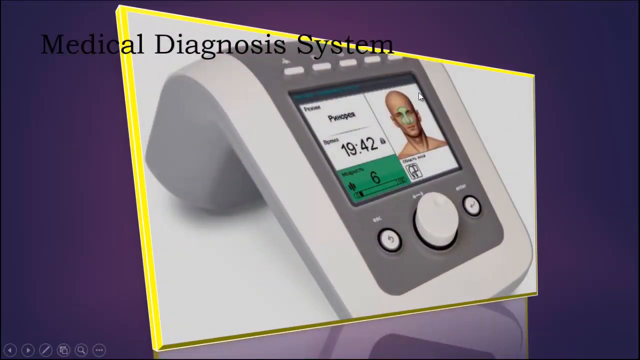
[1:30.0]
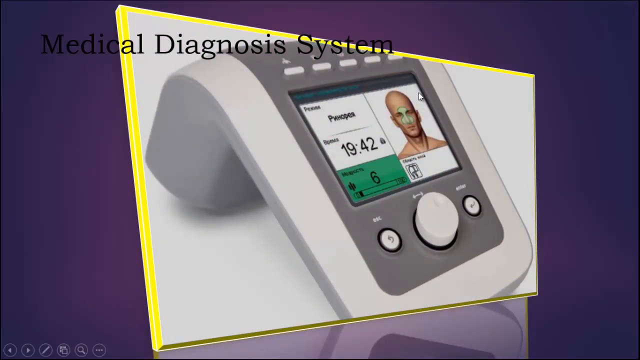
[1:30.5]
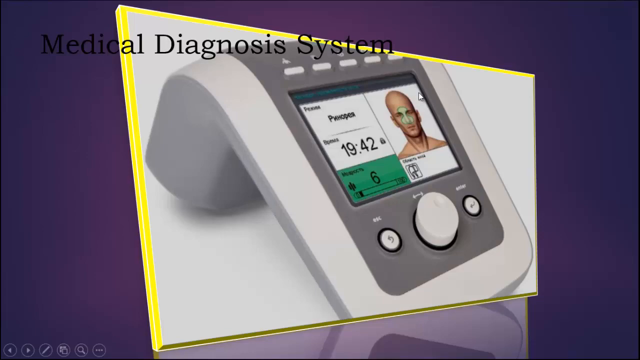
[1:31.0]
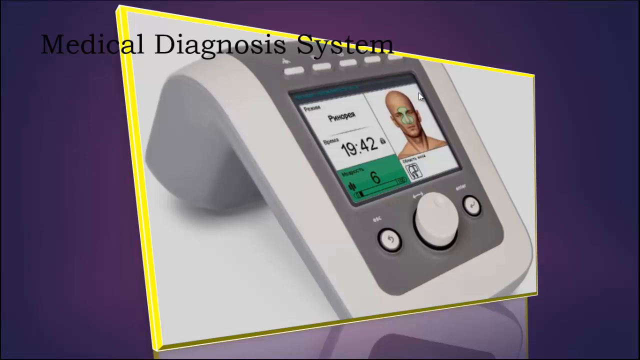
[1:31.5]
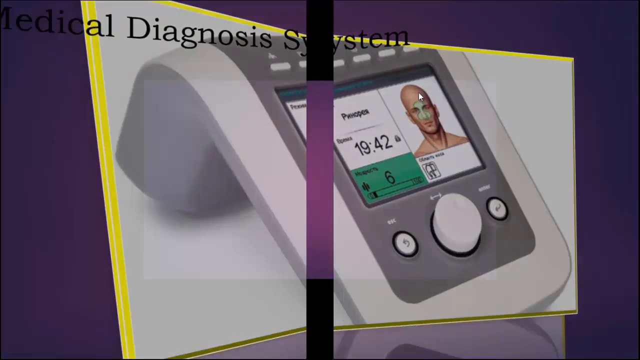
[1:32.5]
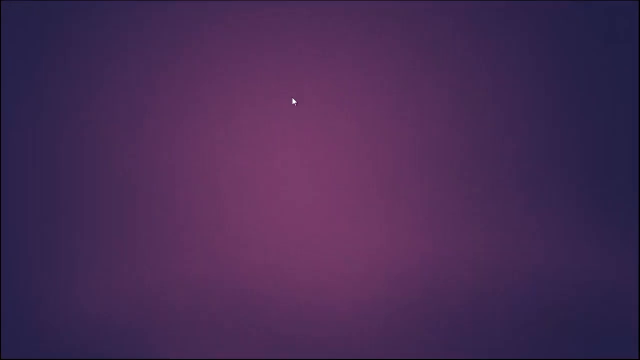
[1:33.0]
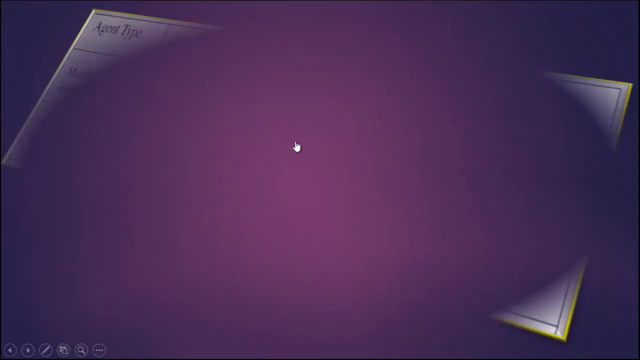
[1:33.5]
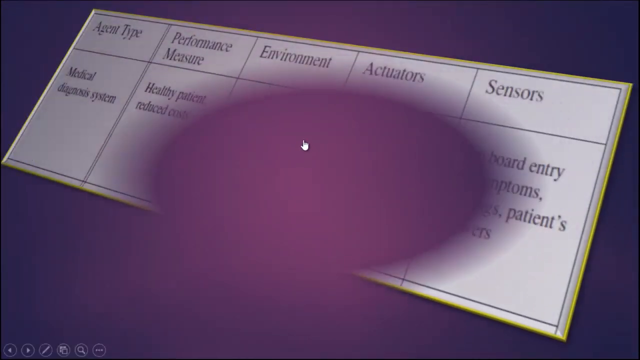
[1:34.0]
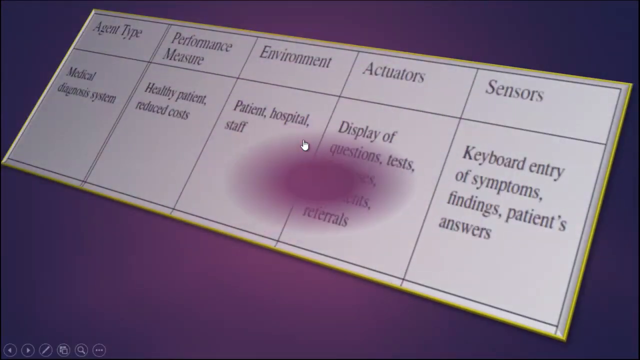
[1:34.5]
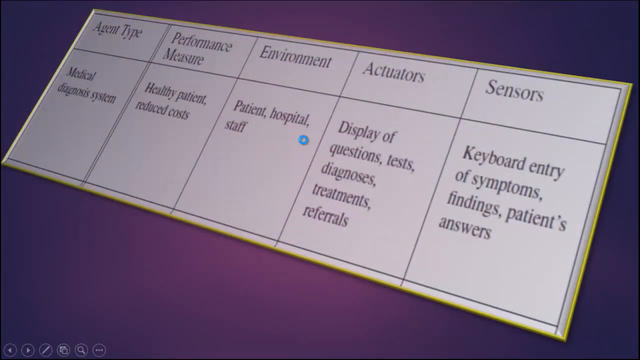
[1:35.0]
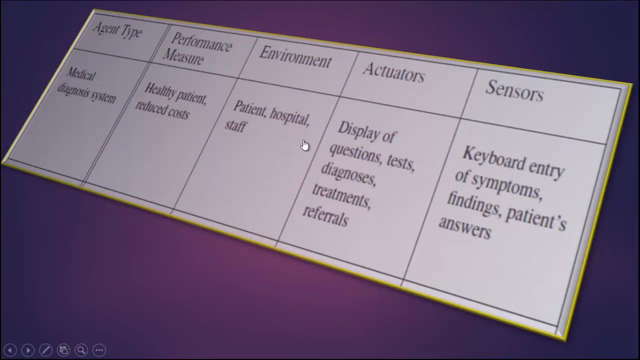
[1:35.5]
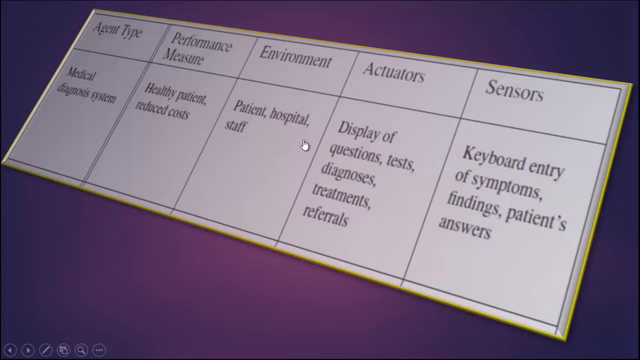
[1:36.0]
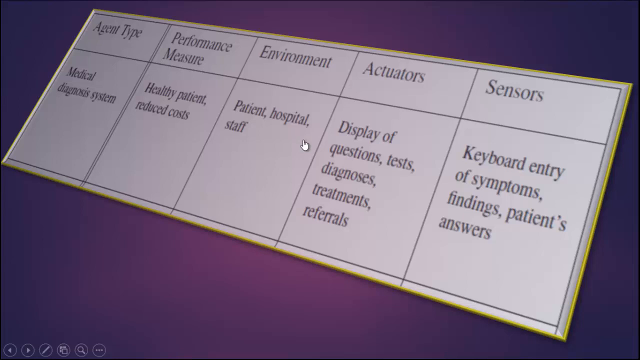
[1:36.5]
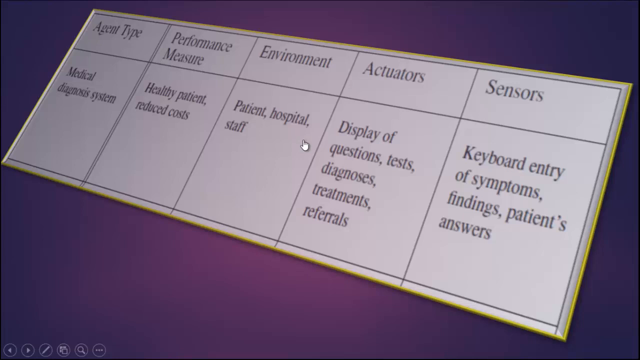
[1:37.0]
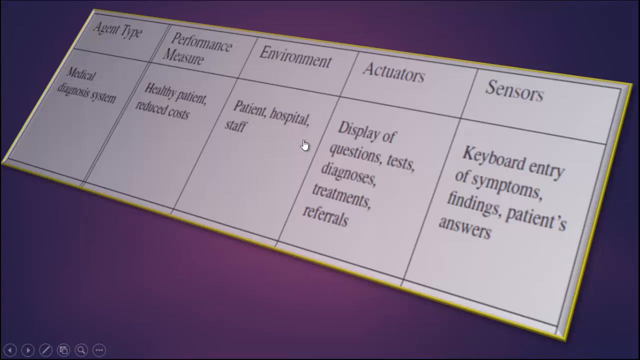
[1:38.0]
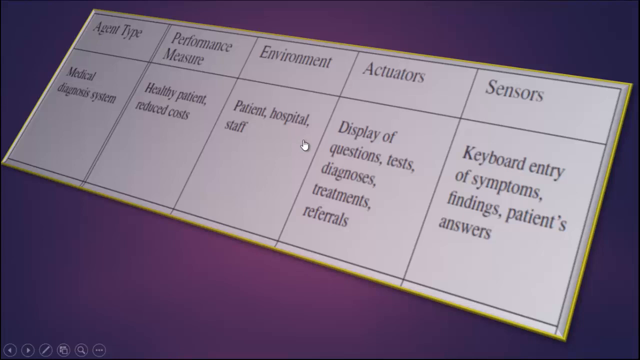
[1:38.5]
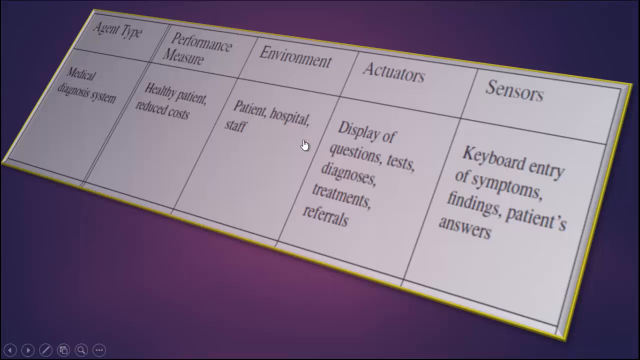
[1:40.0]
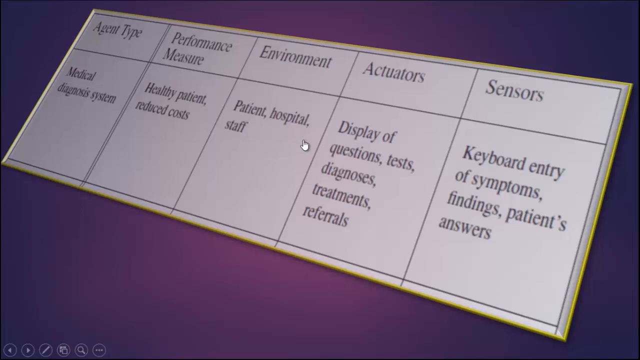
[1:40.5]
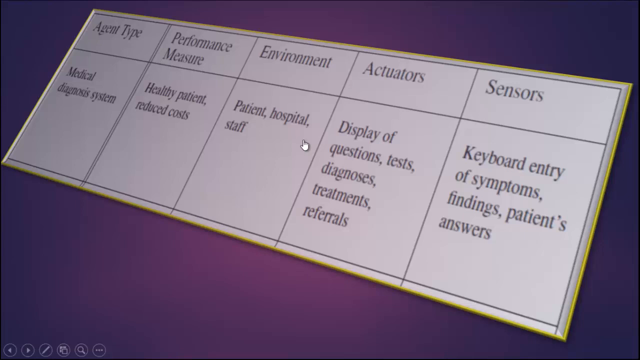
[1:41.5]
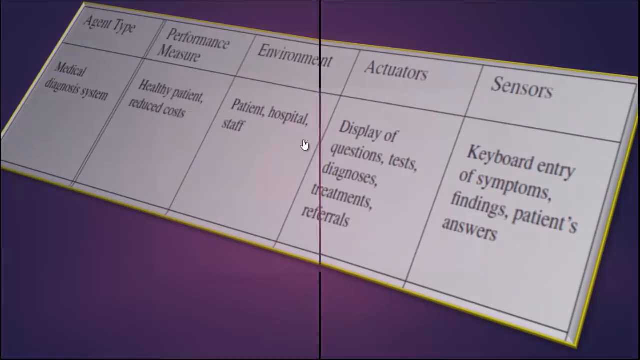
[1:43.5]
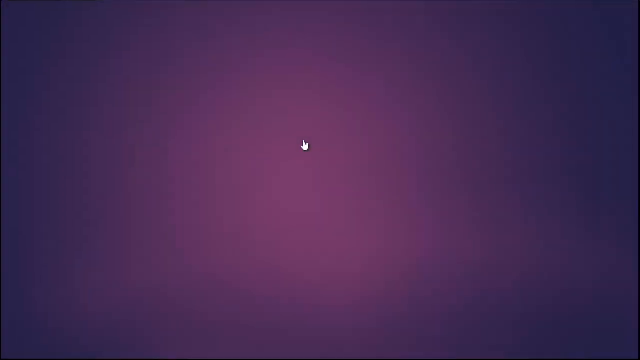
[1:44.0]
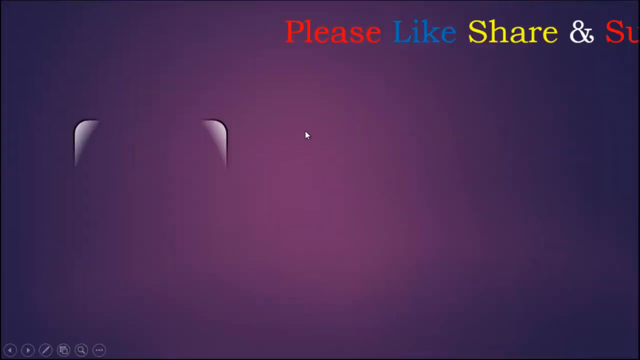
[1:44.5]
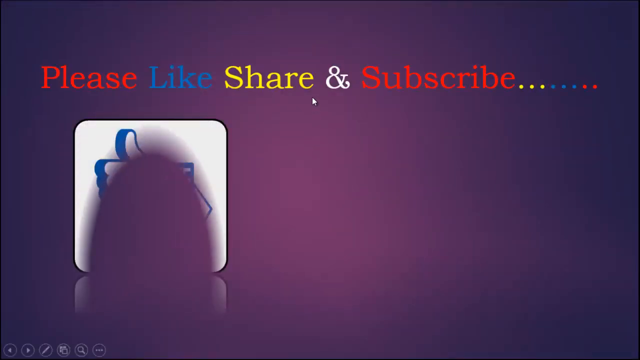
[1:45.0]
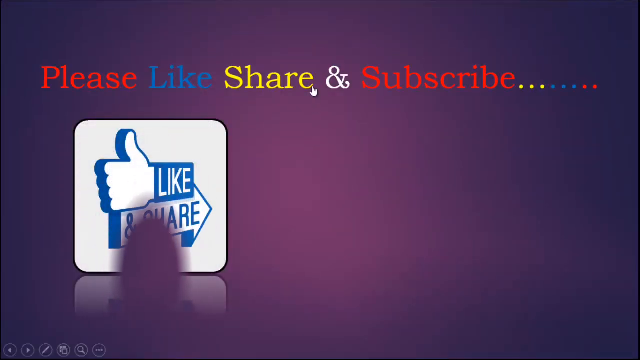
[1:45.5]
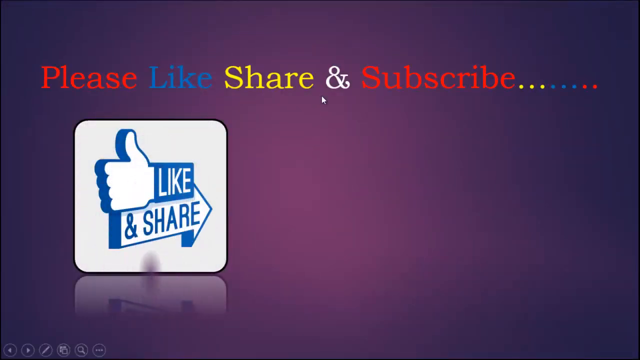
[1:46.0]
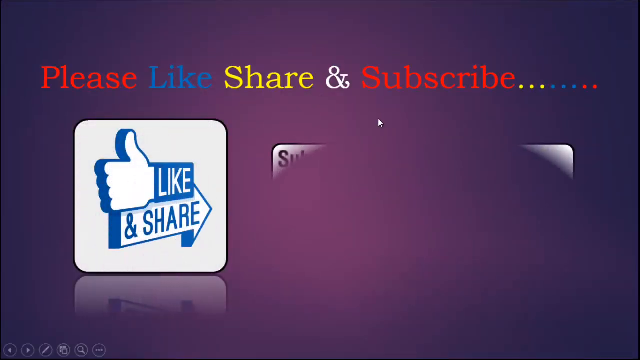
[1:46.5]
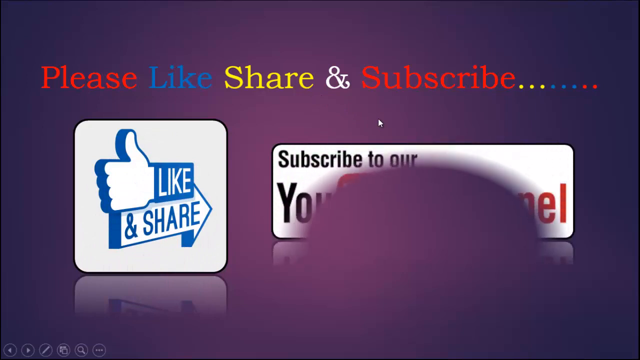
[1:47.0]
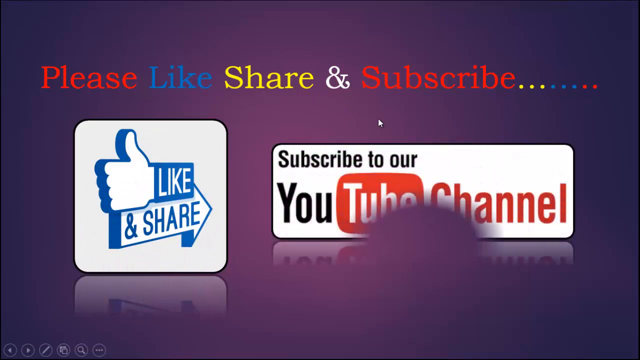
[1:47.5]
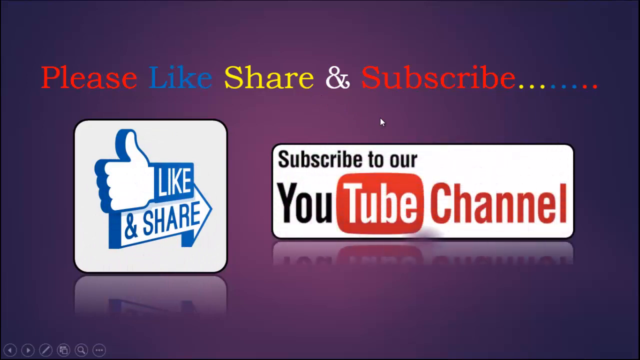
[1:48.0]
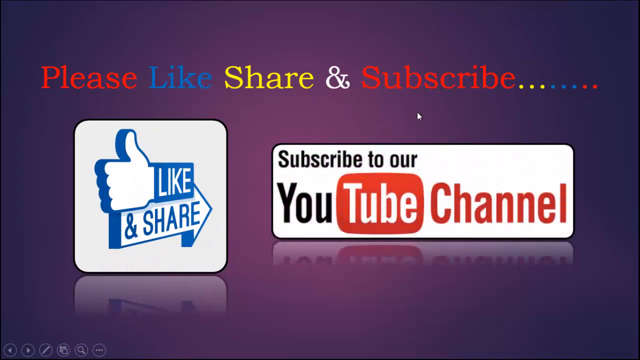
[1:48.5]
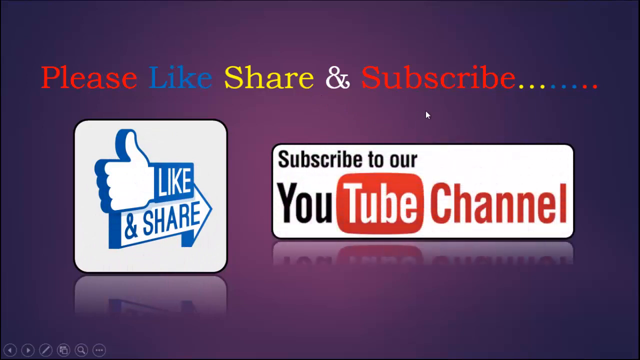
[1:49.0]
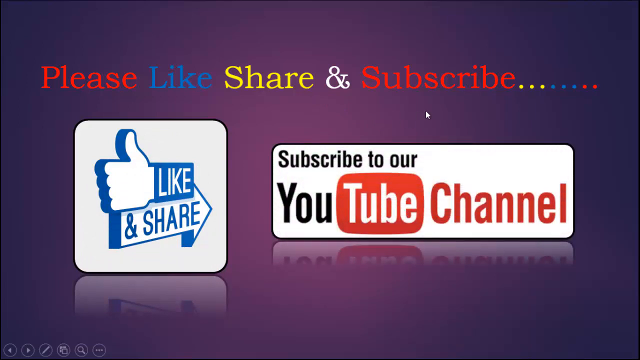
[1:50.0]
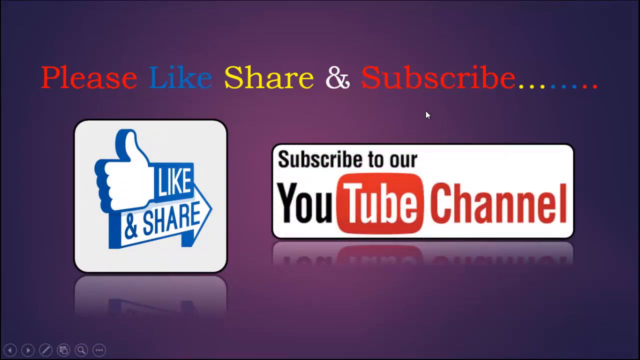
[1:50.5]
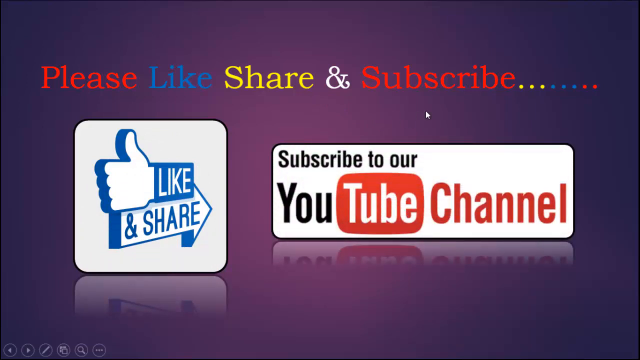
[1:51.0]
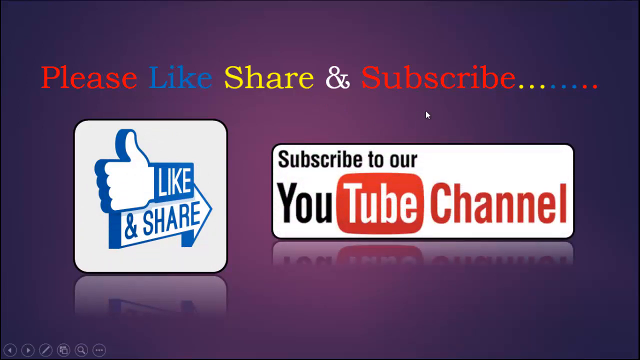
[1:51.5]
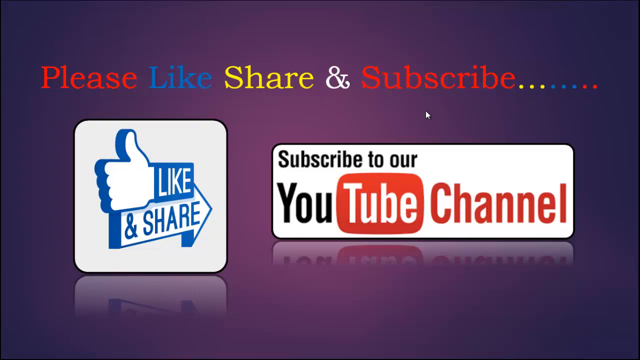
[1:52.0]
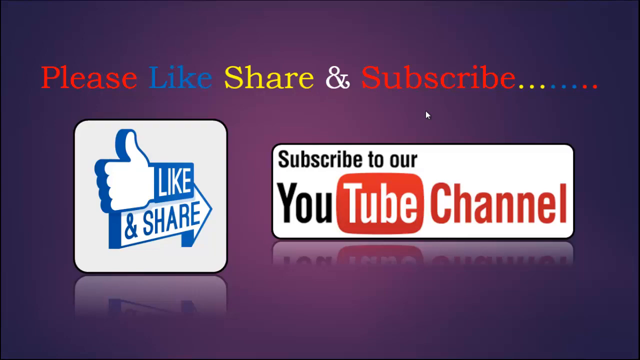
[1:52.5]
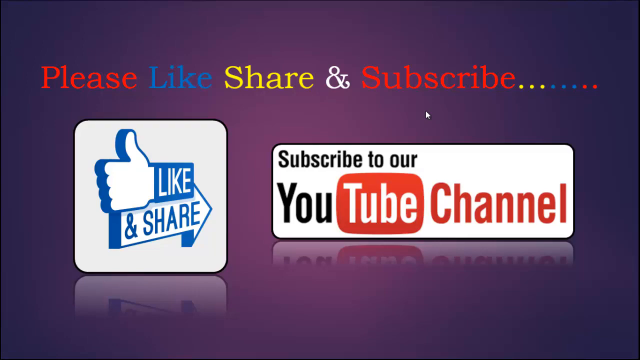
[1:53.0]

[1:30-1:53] The image splits in half and slides across the screen, returning to the five-item word table, this time with the entire table outlined in yellow and the cursor in the center of the screen. The image then splits in half and slides off the screen. The words "please like share and subscribe" appear from the right corner and slide across to the left side of the screen; "please" and "subscribe" are in red, "like" is in blue and "share" is in yellow, with dots of different colors following. Below that is a white box with a thumbs-up Facebook icon and an arrow that says "and share," and next to it a rectangular box that says "subscribe to our YouTube channel up here," with the cursor hovering right above it. It is sitting on a reflective surface.